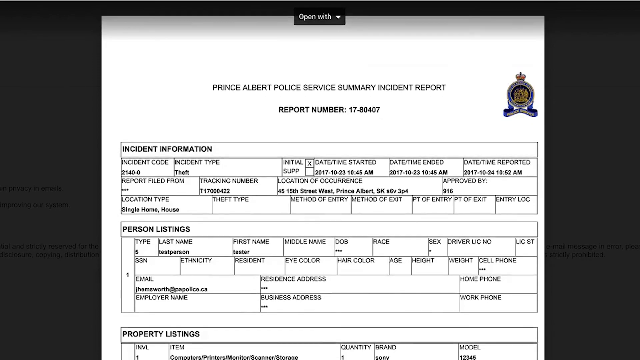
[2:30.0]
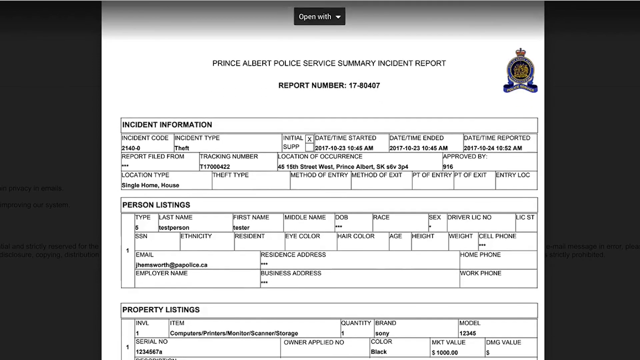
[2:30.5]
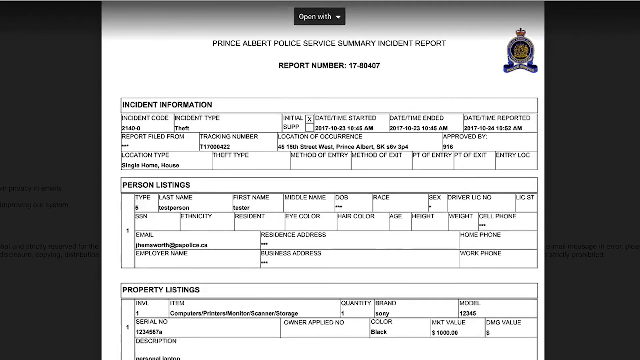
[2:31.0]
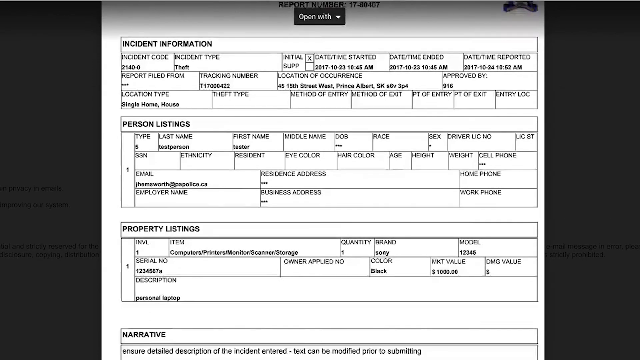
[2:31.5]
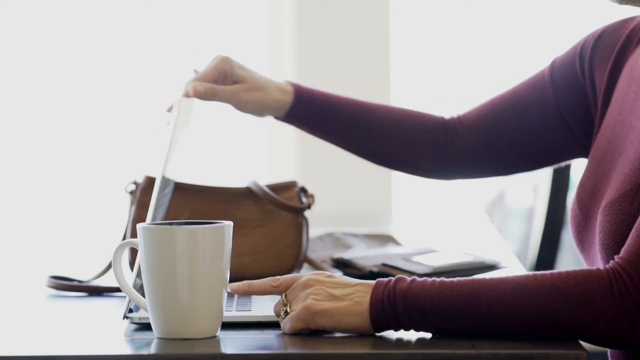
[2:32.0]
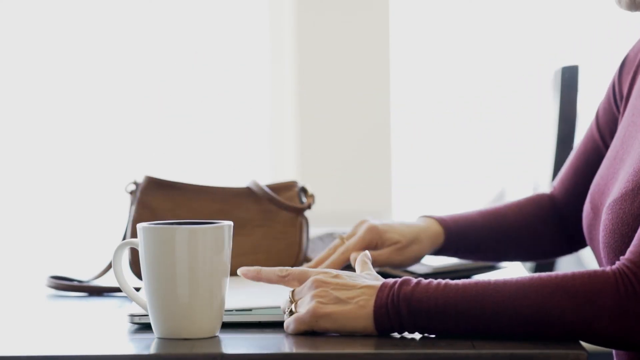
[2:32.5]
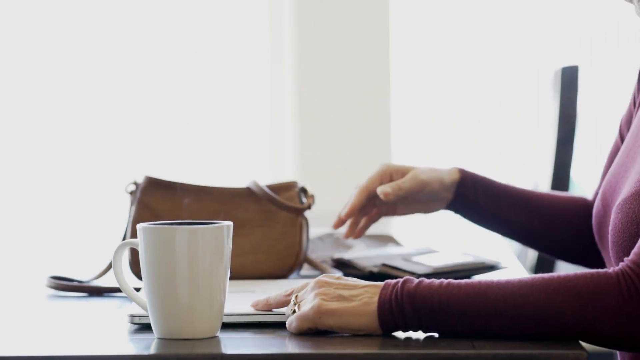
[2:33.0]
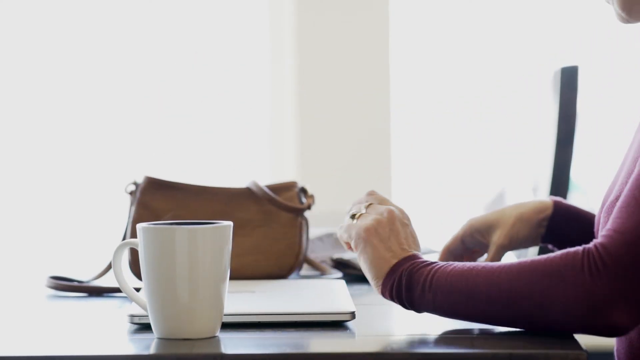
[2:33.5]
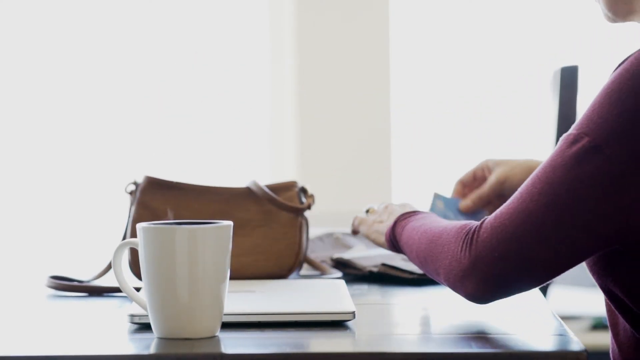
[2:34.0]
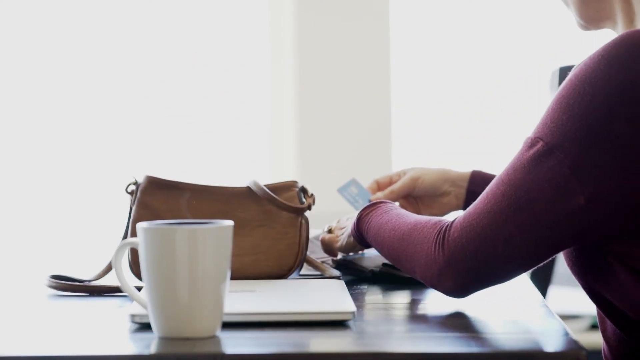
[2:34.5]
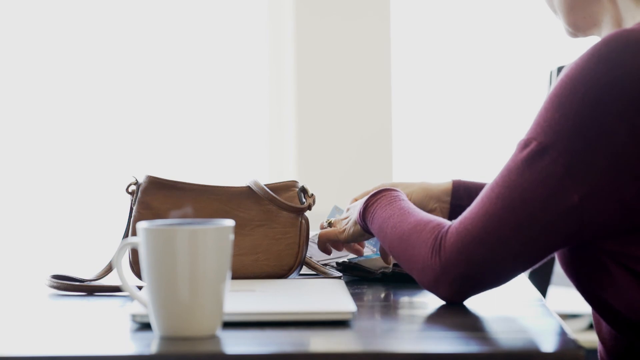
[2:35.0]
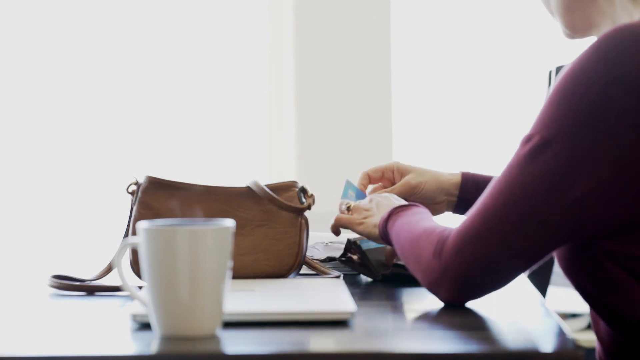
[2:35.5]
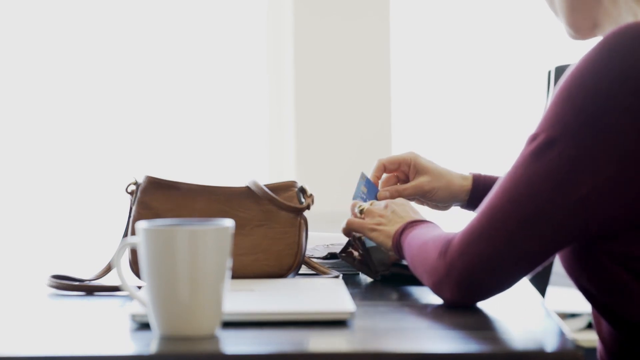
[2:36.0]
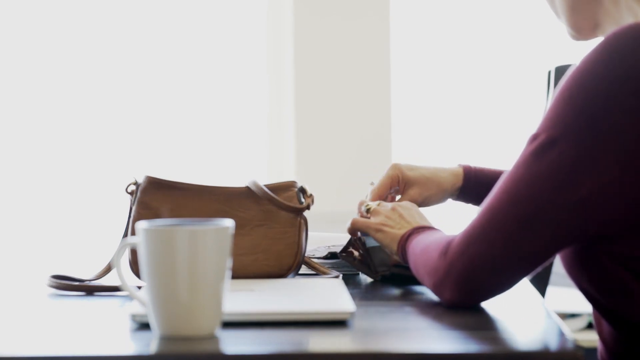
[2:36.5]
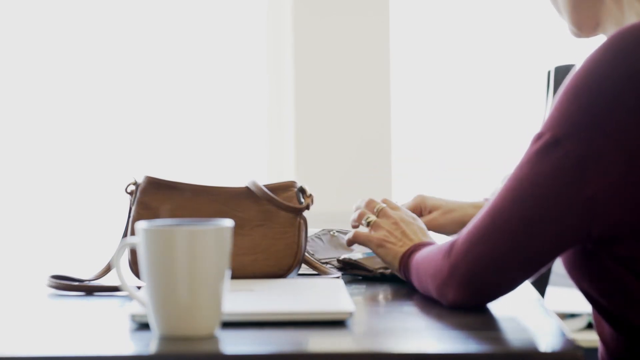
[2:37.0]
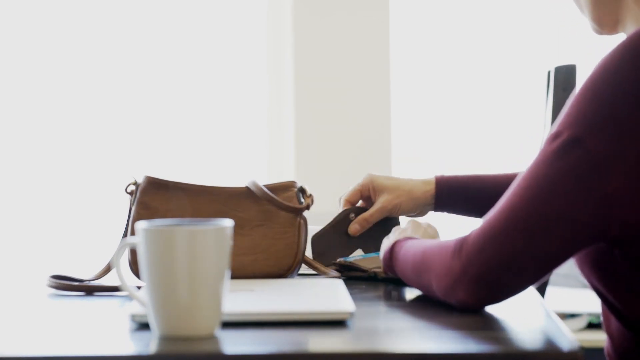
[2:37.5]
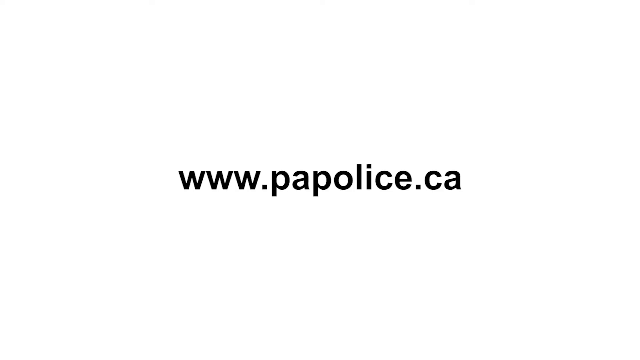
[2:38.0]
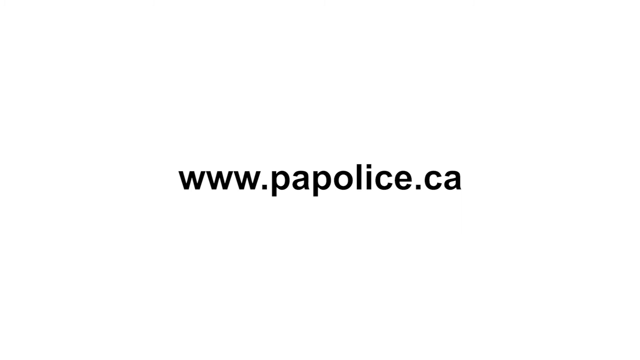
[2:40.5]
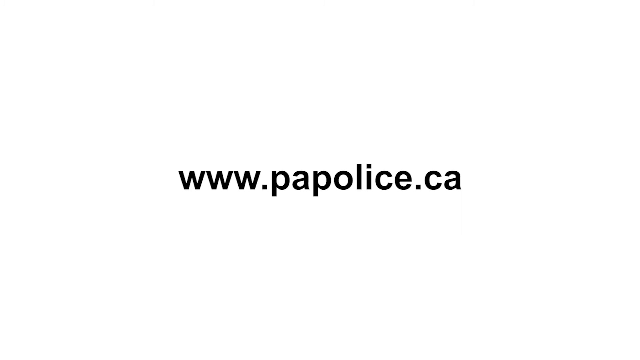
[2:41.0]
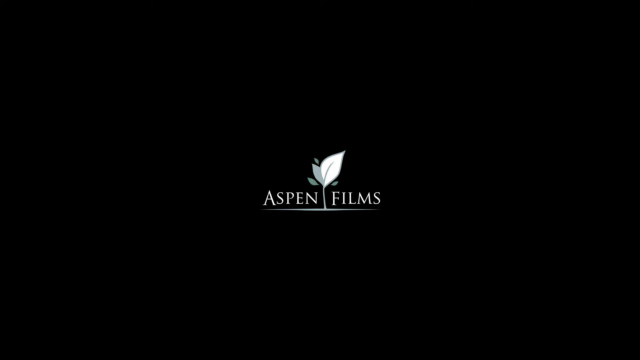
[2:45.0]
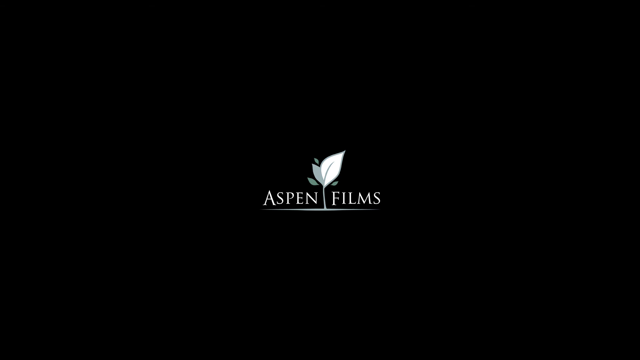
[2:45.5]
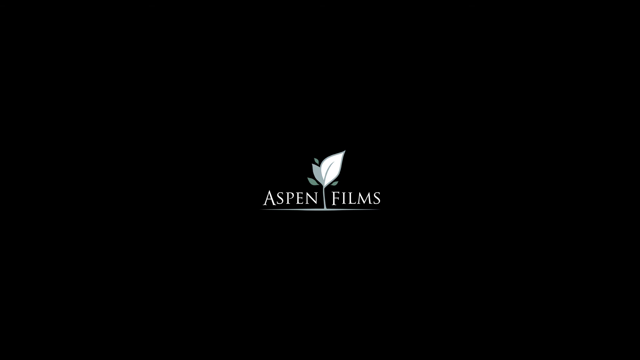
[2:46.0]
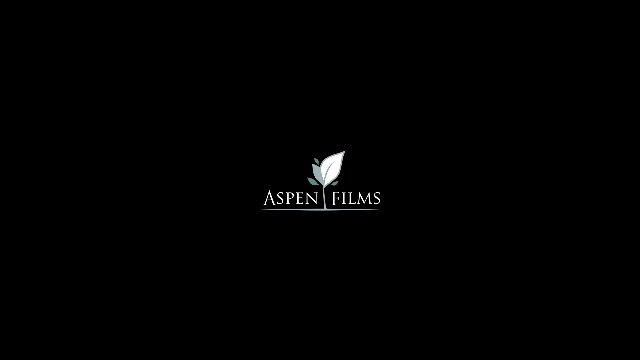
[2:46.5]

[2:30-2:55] The attached file from the email is a Prince Albert Police Service summary incident report showing the report number, or case number. It lists incident information, incident code, incident type, date/time started, date/time ended, date/time reported, report filed from, tracking number, location of occurrence, approved by, location type, method of entry, method of exit, person listings, party listings and a narrative. The woman, done with what she is doing online, closes her laptop, and "www.papolice.canada" appears.